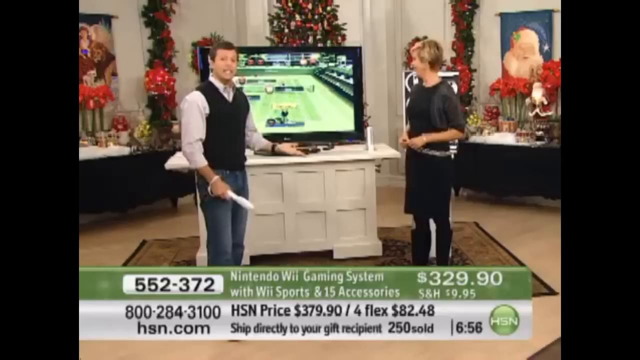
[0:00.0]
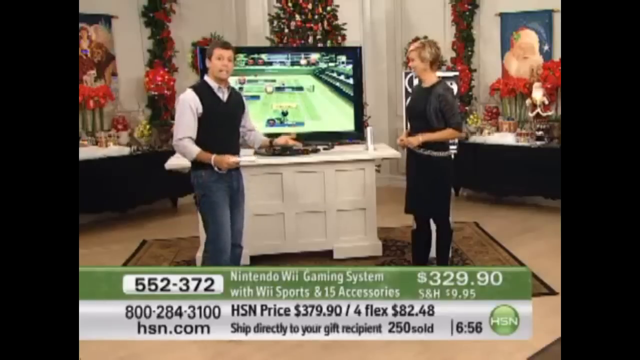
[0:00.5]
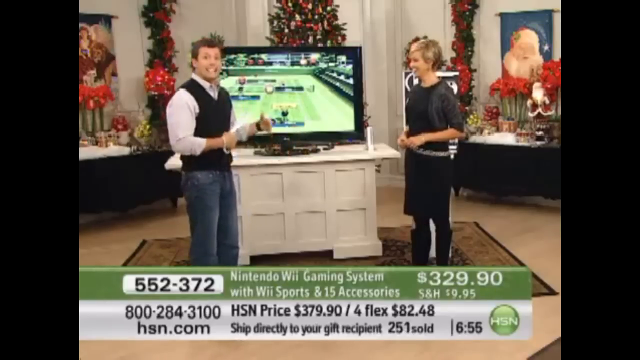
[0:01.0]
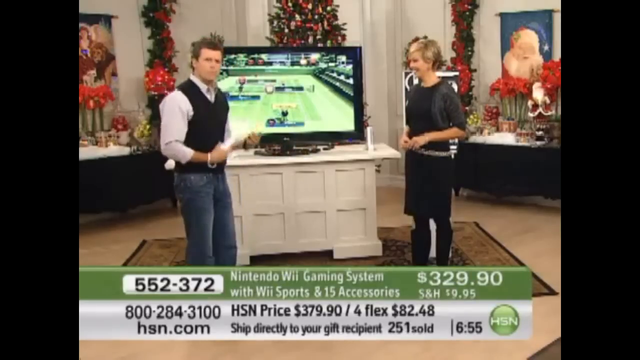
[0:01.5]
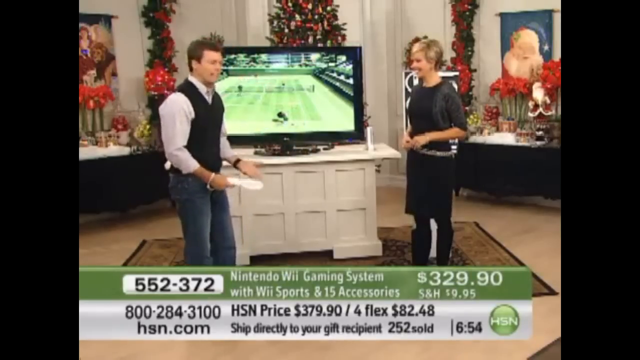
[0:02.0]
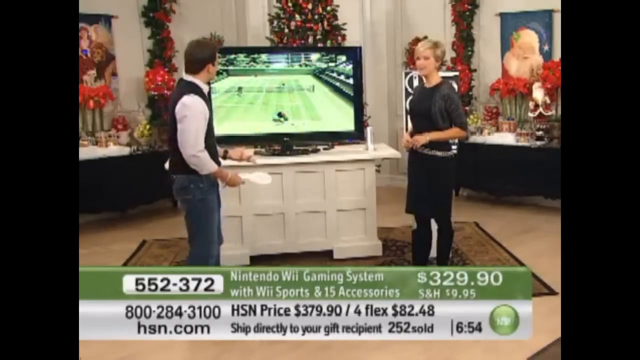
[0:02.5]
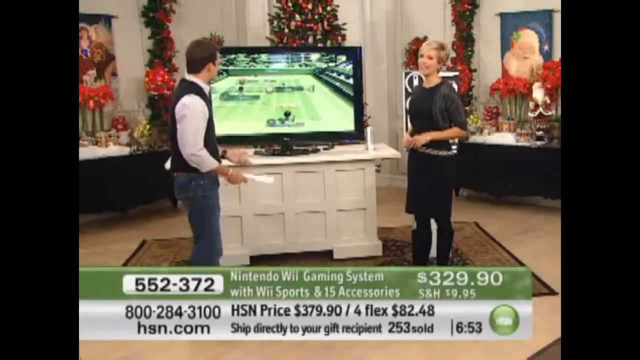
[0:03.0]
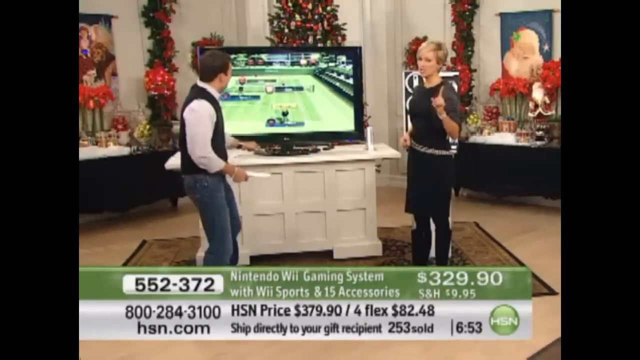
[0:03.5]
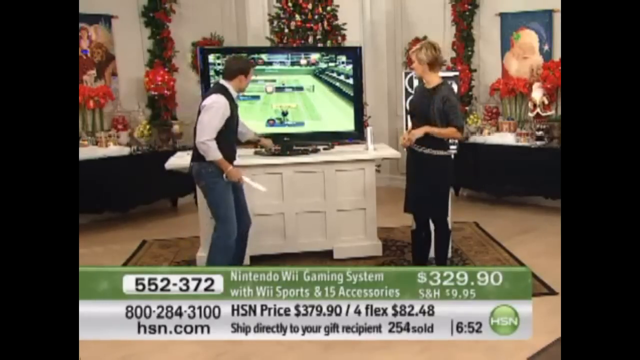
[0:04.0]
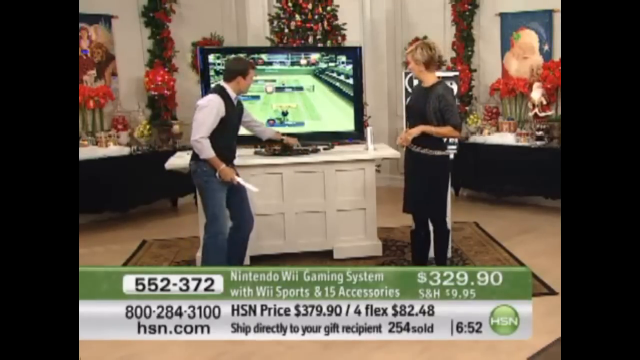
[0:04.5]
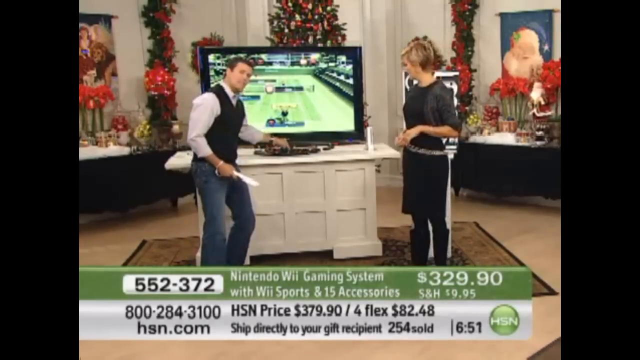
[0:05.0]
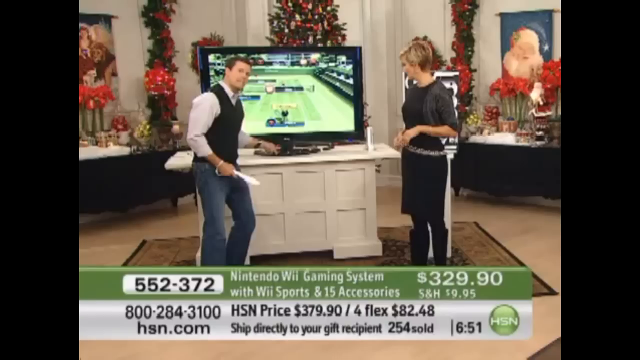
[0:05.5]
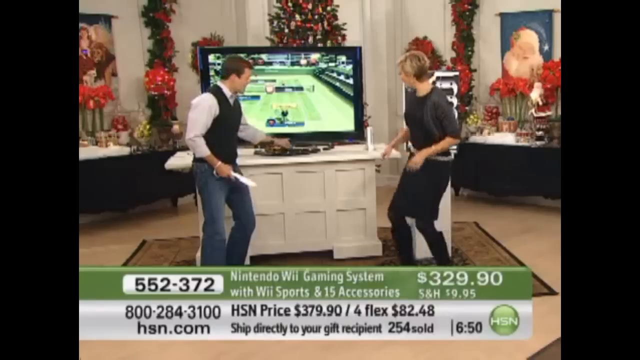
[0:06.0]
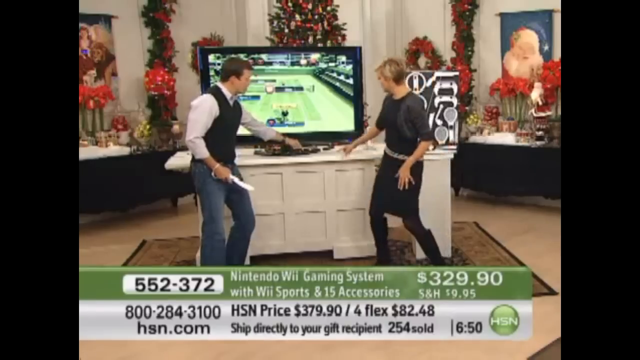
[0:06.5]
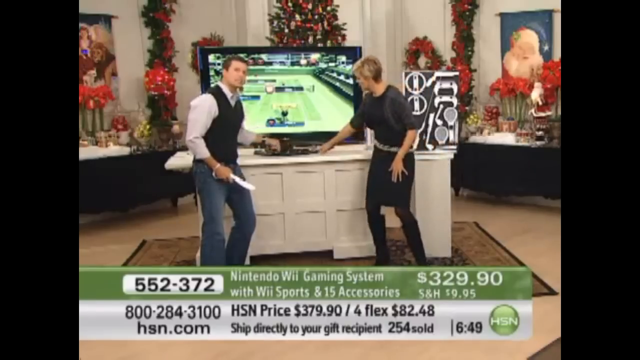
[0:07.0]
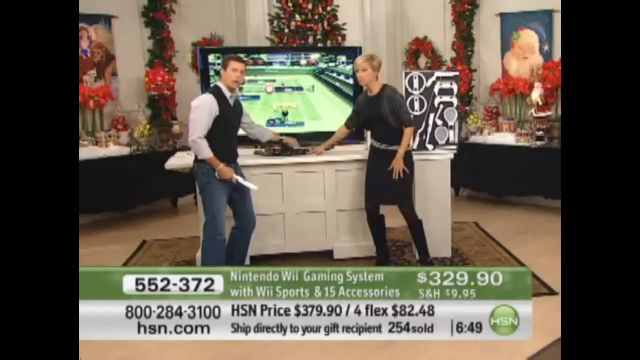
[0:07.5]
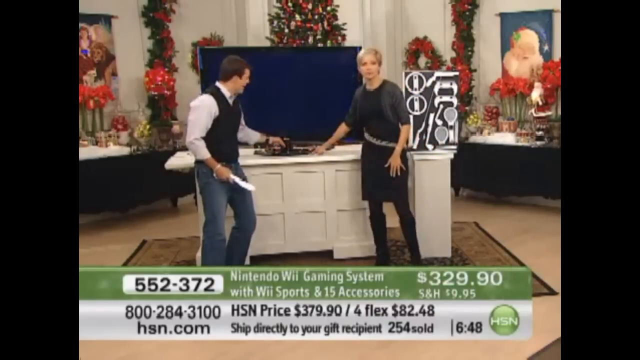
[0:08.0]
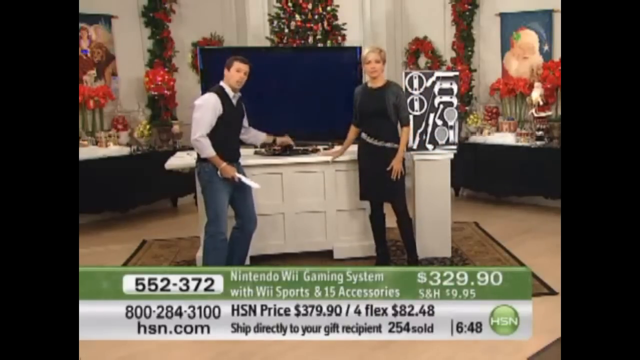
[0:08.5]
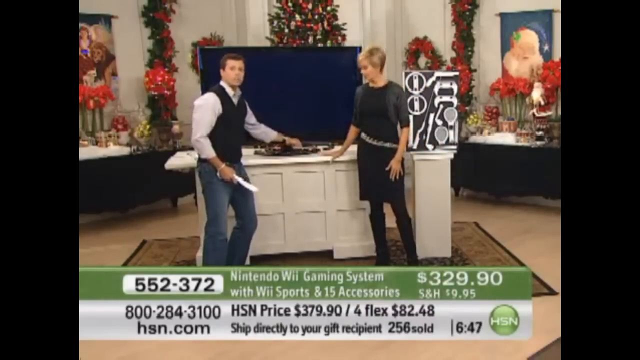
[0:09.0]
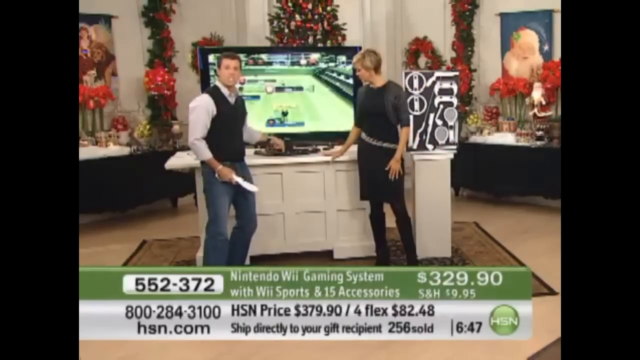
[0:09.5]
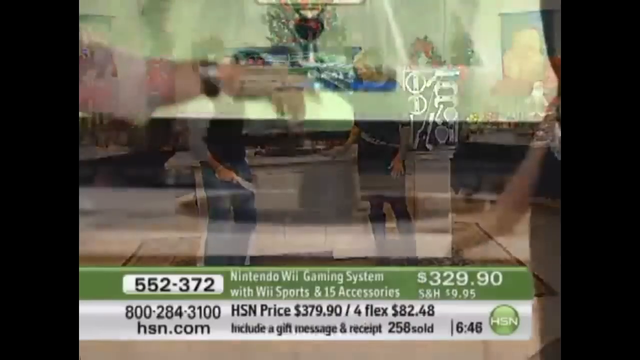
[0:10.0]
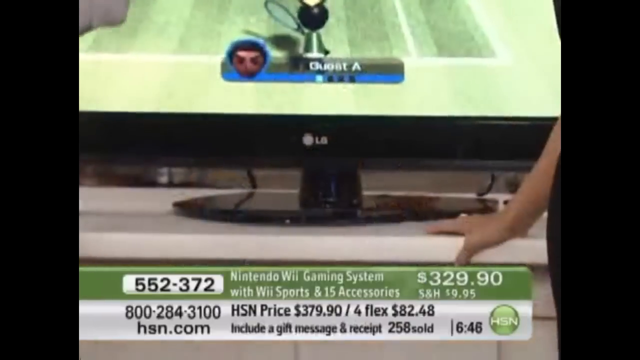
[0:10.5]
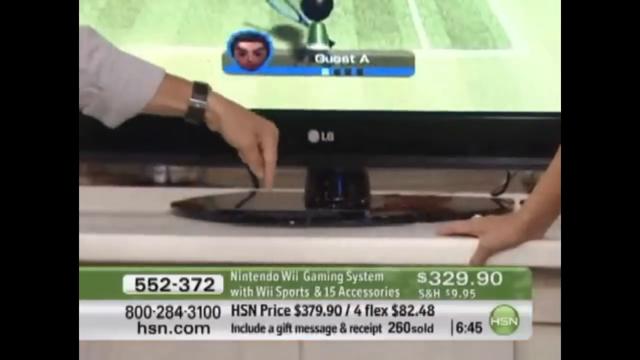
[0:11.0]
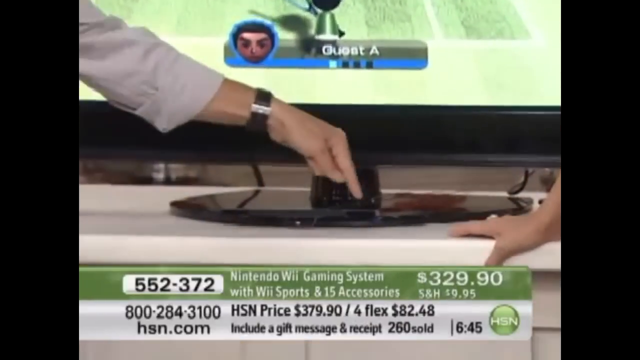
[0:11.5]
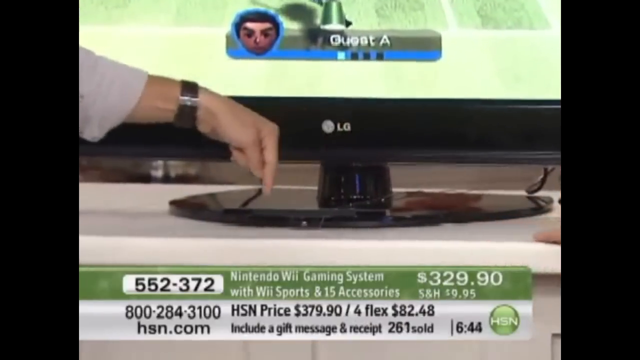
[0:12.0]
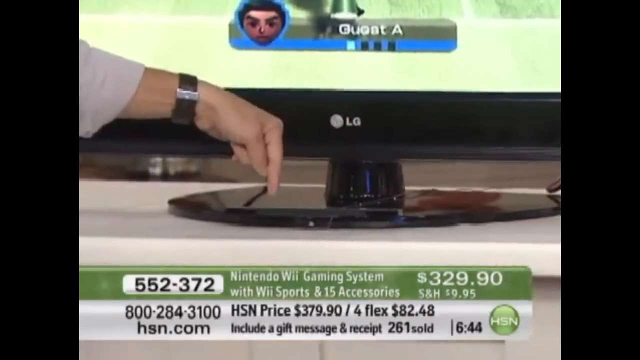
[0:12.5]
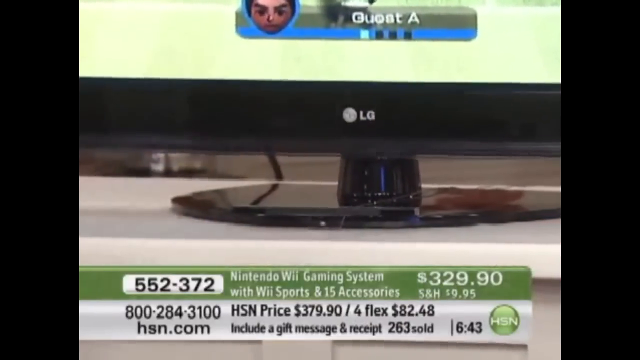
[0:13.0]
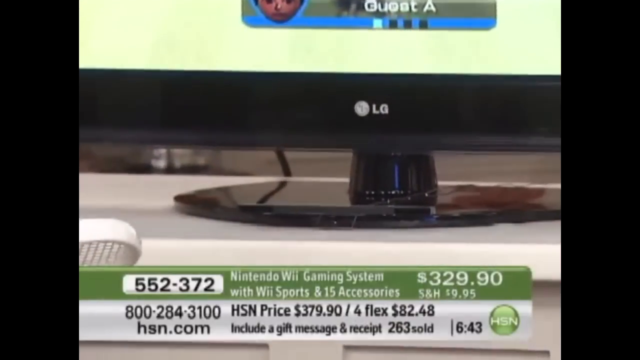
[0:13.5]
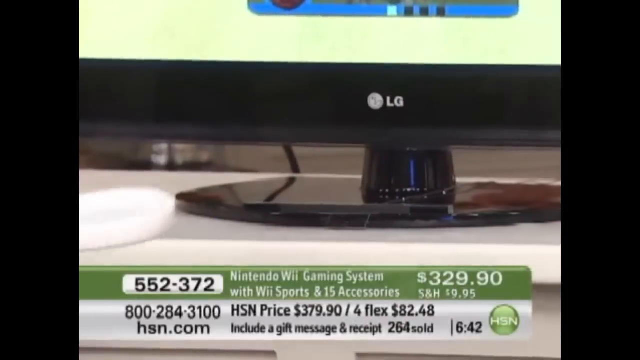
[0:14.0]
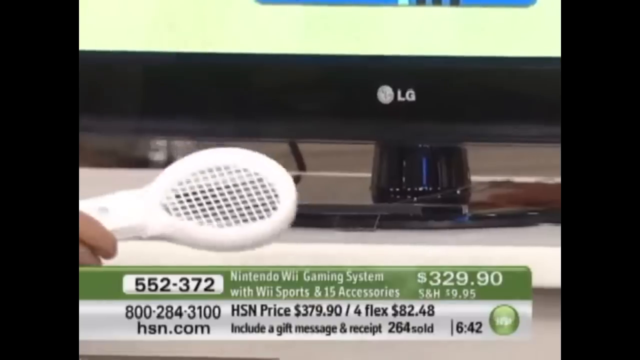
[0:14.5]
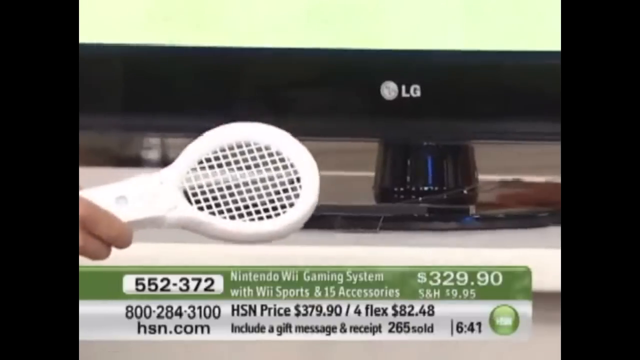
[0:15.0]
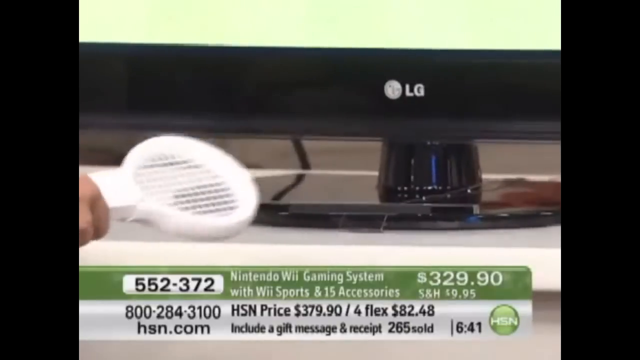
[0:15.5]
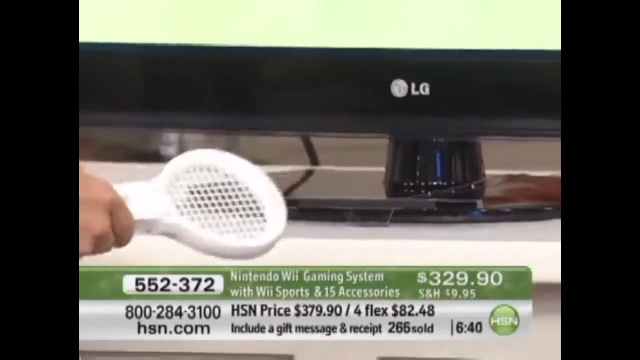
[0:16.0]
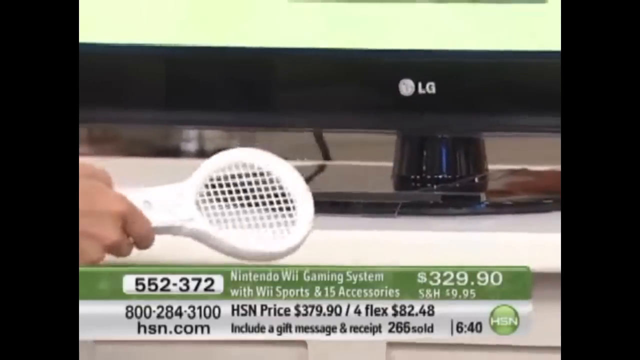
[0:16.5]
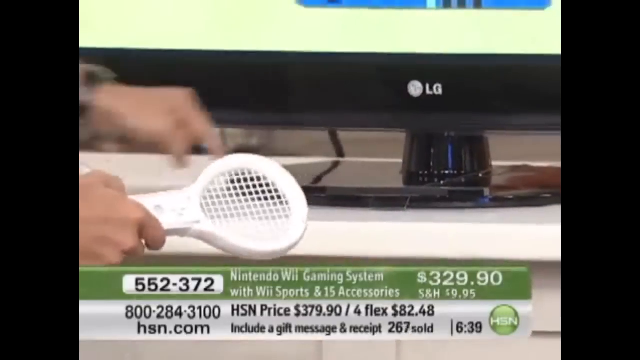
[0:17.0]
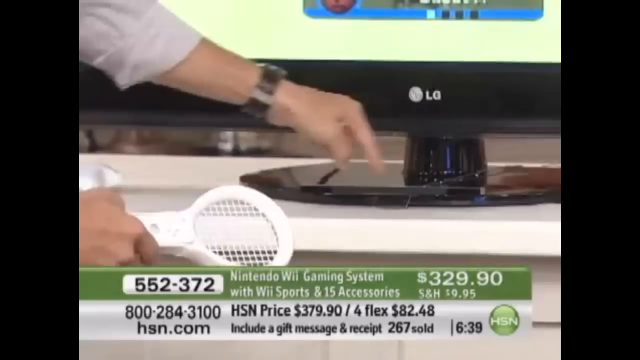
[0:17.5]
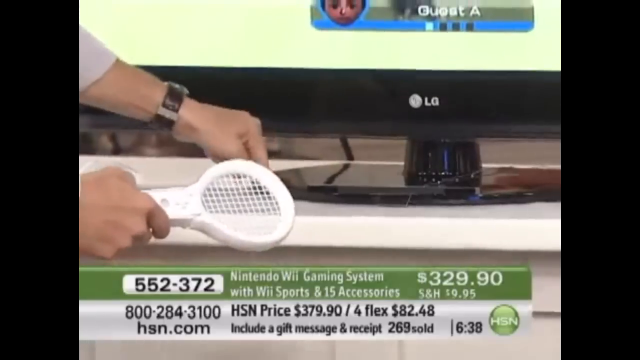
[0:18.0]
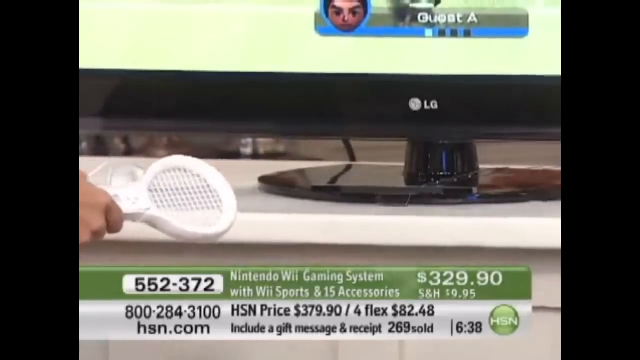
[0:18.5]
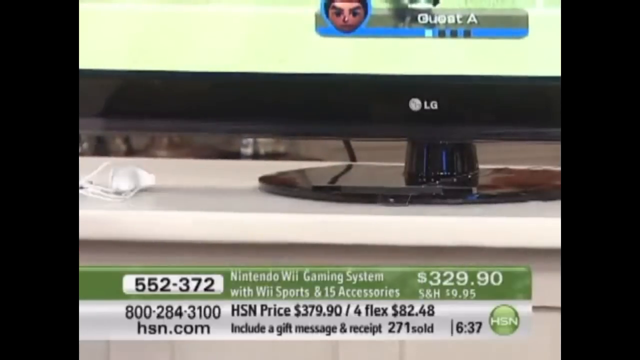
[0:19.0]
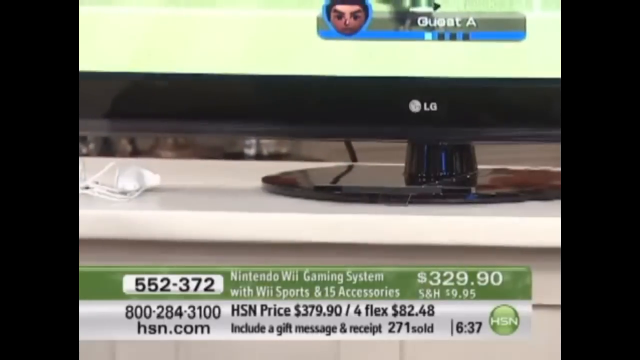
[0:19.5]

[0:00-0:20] A presentation on the Home Shopping Network is underway. At the bottom of the screen is a description of the item being sold: a Nintendo Wii Gaming System with Wii Sports and 15 accessories, product number 552372, priced at $329.90 with shipping and handling of $9.95. The text bar at the bottom shows that 250 have been sold at the beginning, and that number keeps increasing during the presentation. A timer on the right counts down. A male presenter and a female presenter are on screen, and between them is a white console with a large screen TV on it, on which the Wii game is being played. The male presenter points to the Wii console in front of the television, which appears as just a flat strip at the base of the television. He holds a white instrument in his right hand that looks like a small tennis racket.